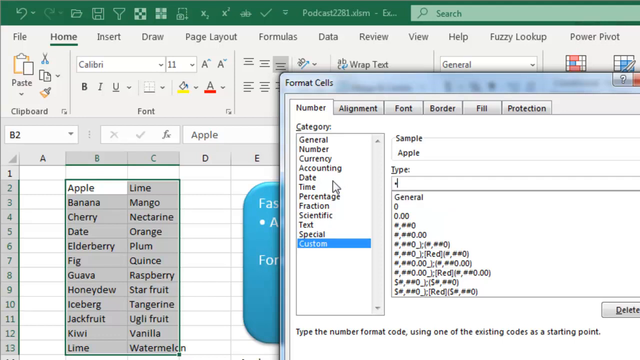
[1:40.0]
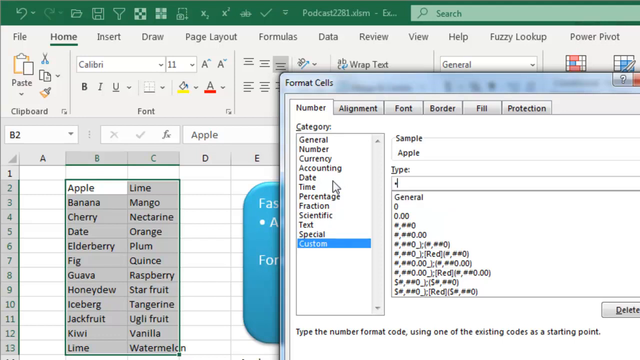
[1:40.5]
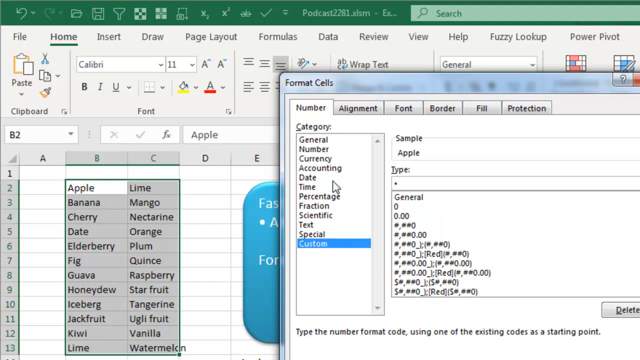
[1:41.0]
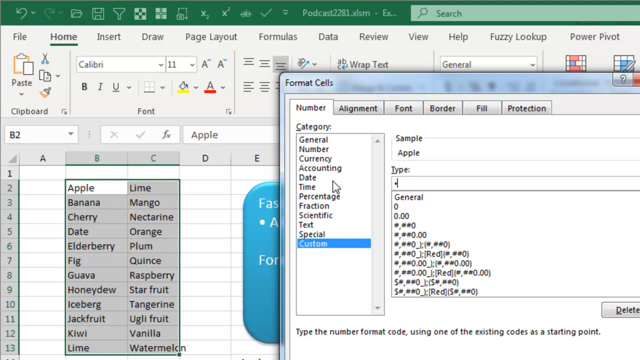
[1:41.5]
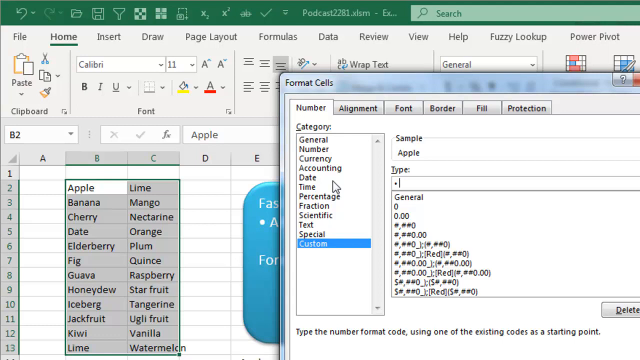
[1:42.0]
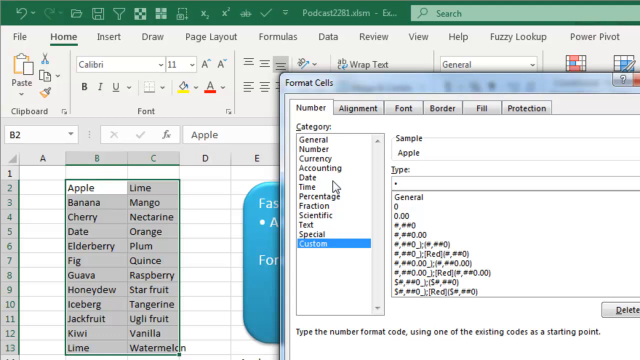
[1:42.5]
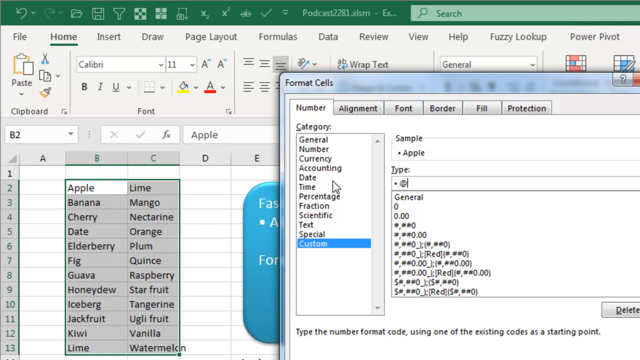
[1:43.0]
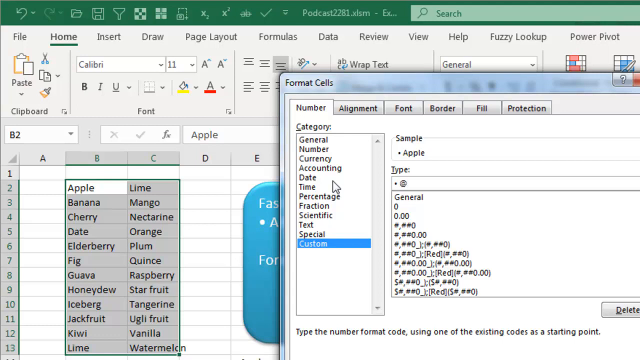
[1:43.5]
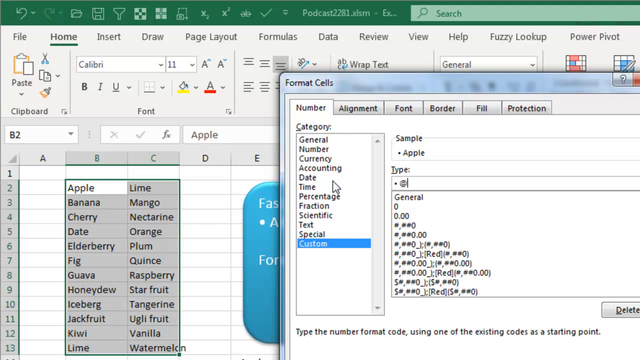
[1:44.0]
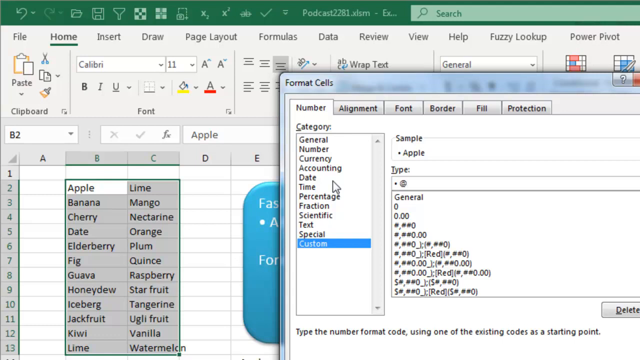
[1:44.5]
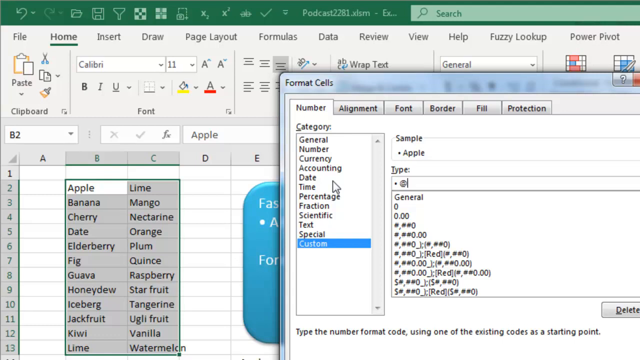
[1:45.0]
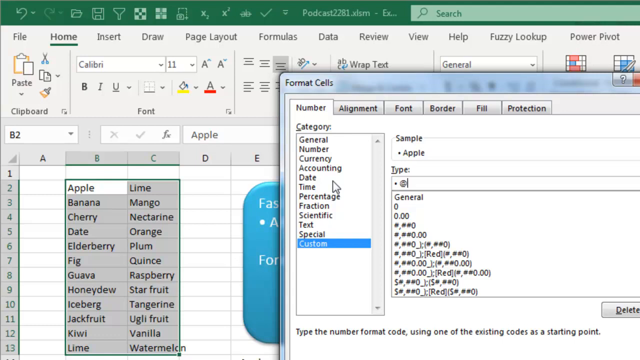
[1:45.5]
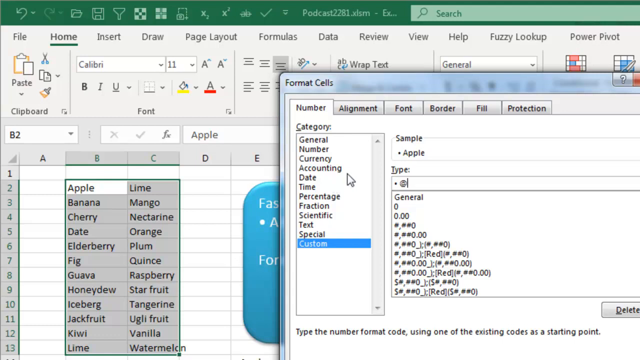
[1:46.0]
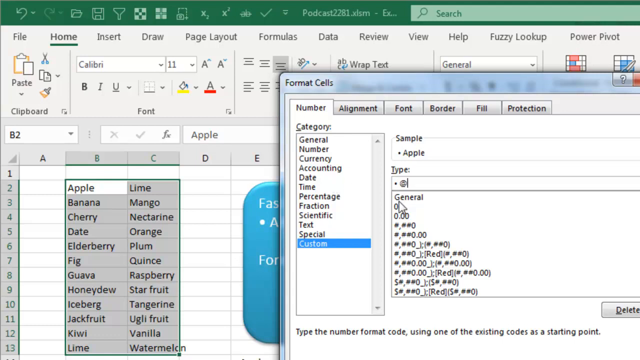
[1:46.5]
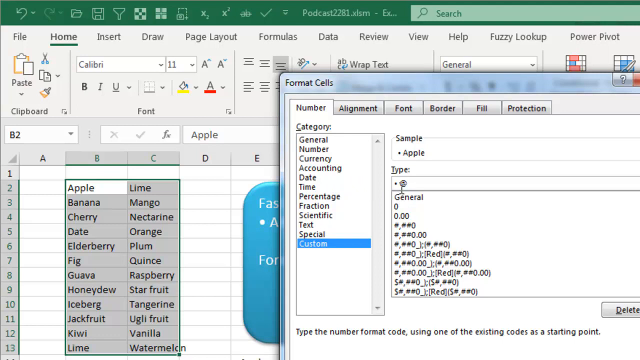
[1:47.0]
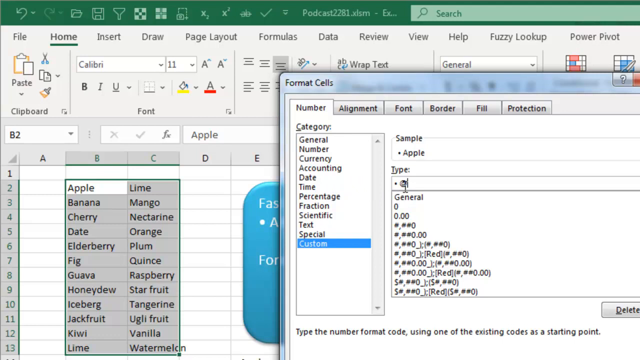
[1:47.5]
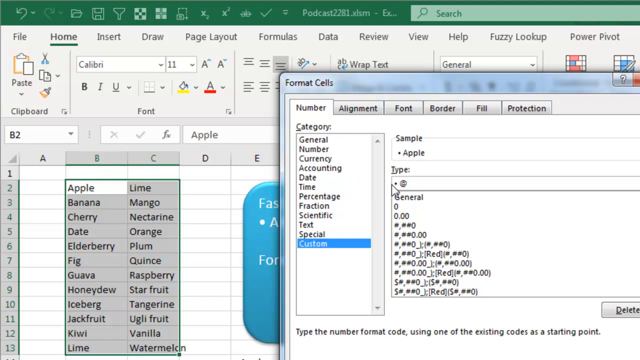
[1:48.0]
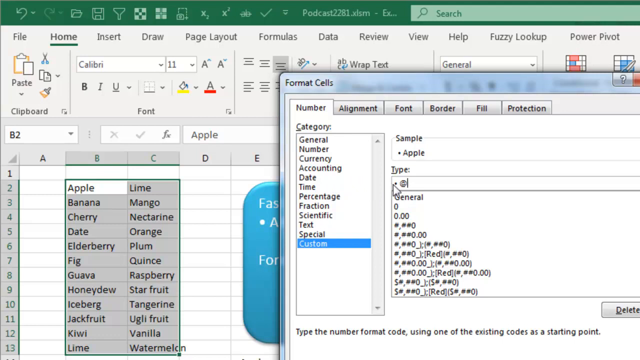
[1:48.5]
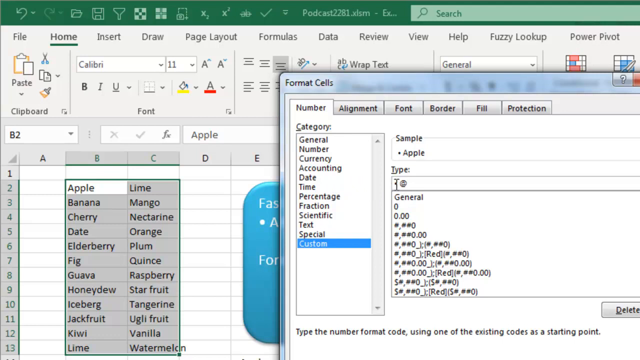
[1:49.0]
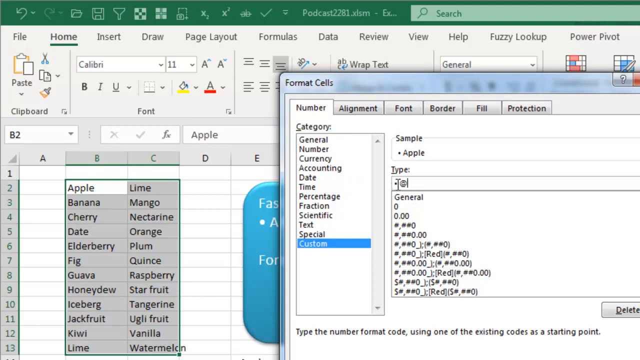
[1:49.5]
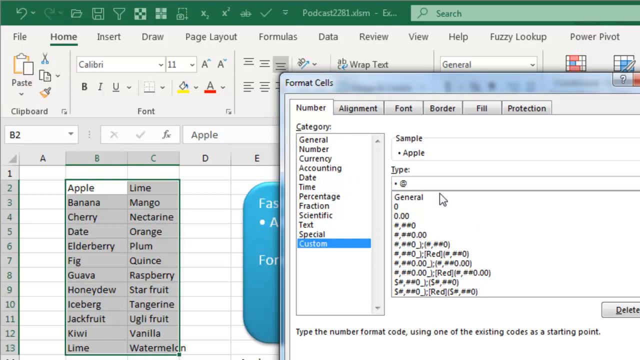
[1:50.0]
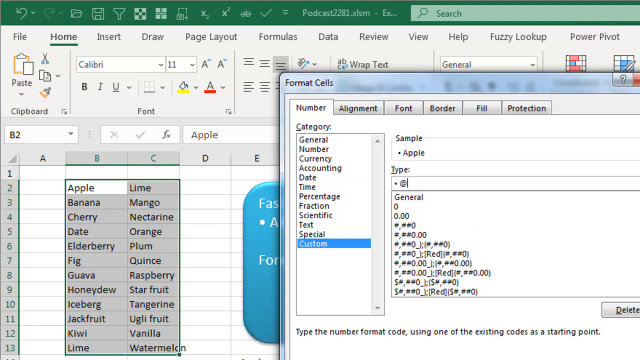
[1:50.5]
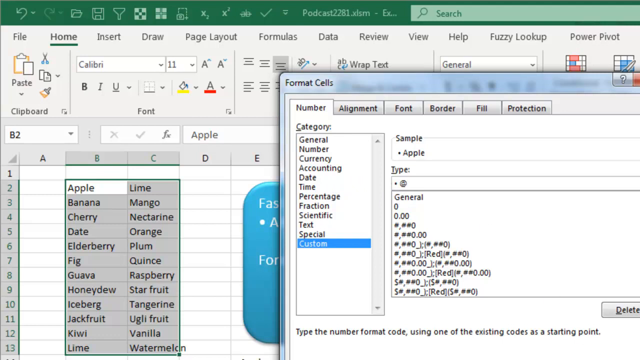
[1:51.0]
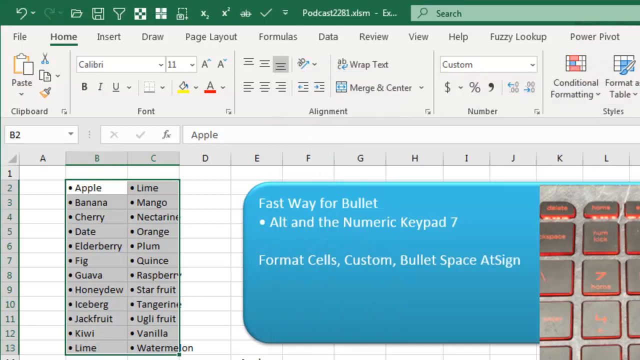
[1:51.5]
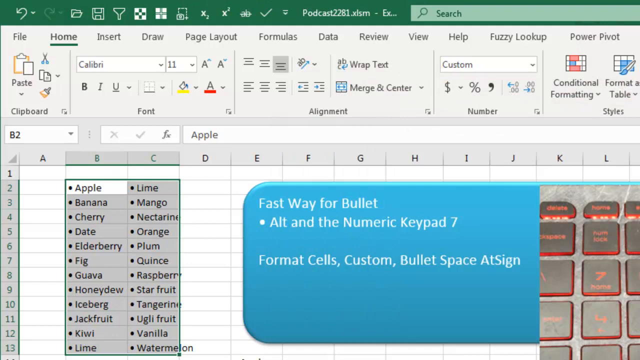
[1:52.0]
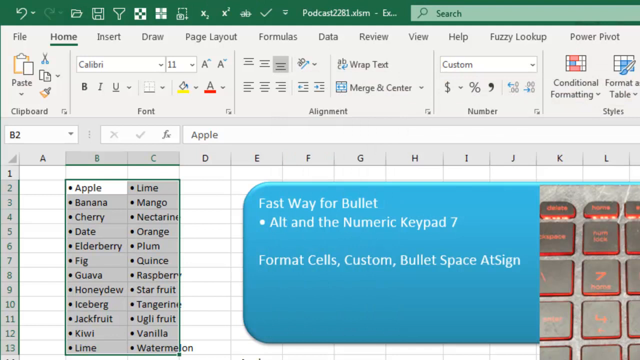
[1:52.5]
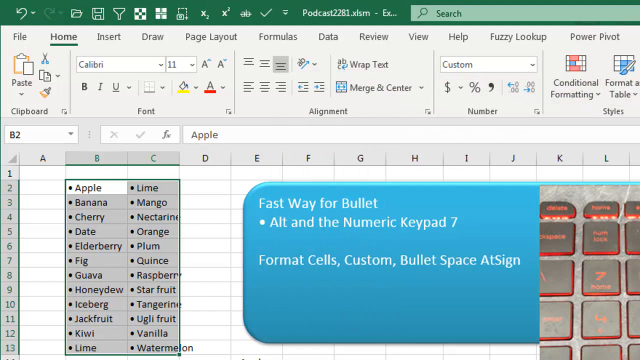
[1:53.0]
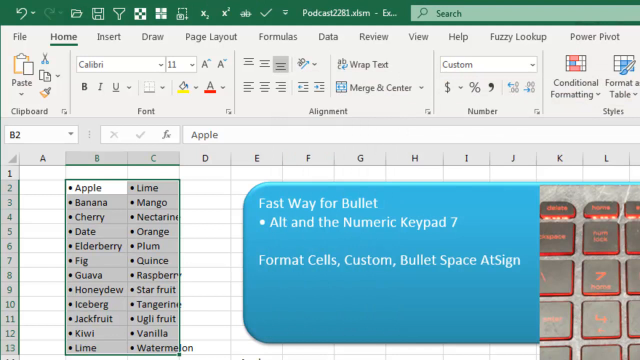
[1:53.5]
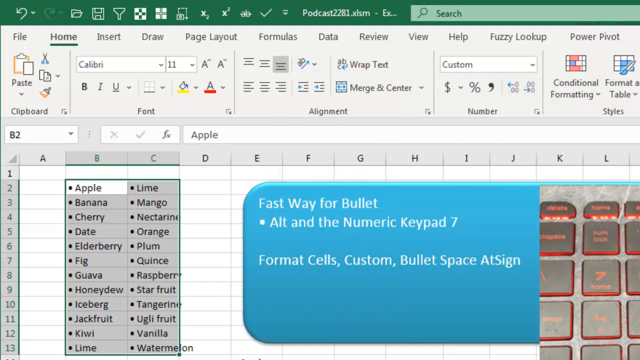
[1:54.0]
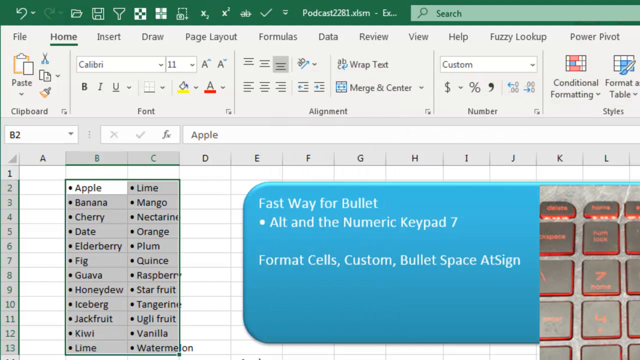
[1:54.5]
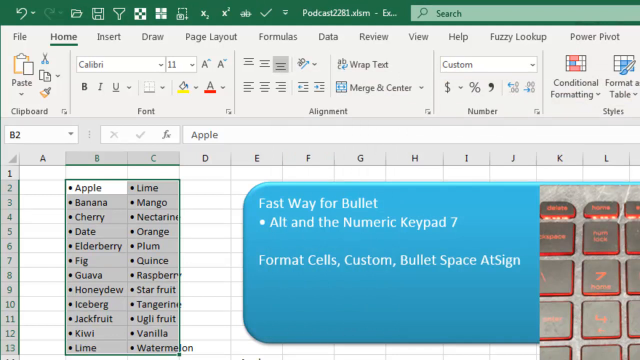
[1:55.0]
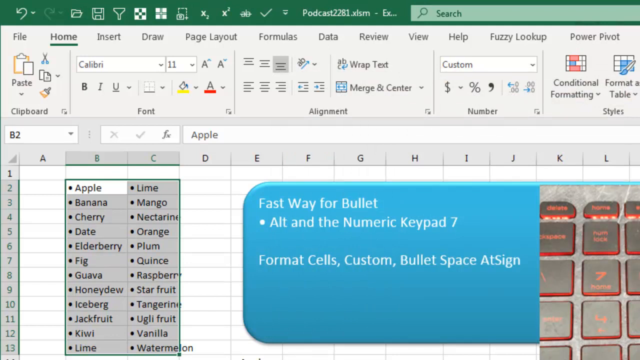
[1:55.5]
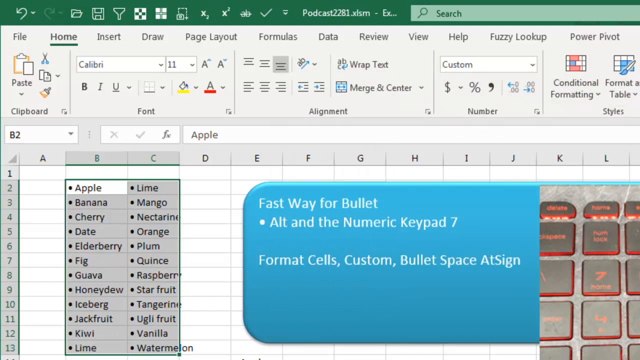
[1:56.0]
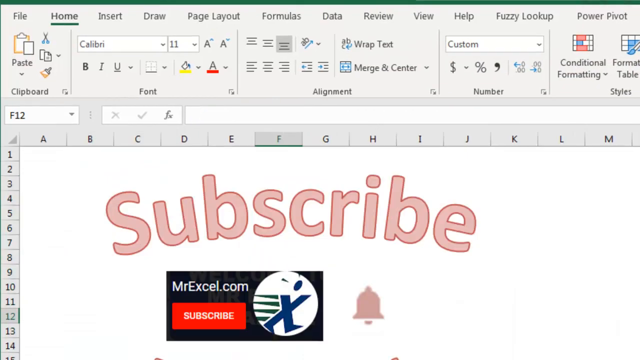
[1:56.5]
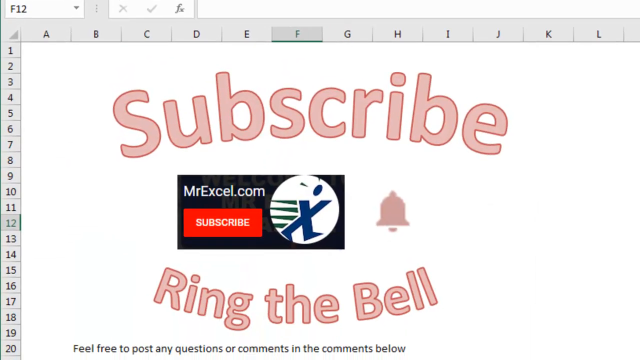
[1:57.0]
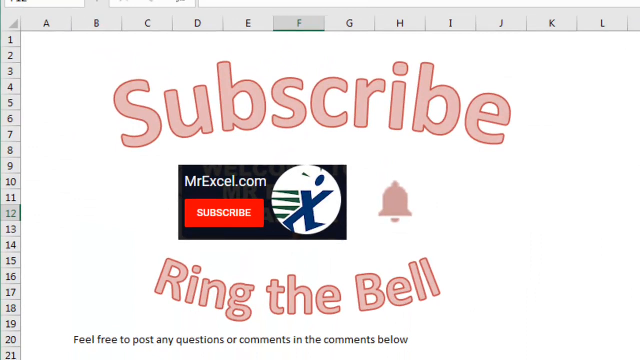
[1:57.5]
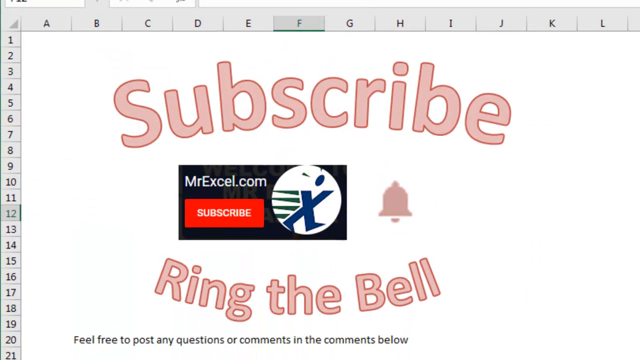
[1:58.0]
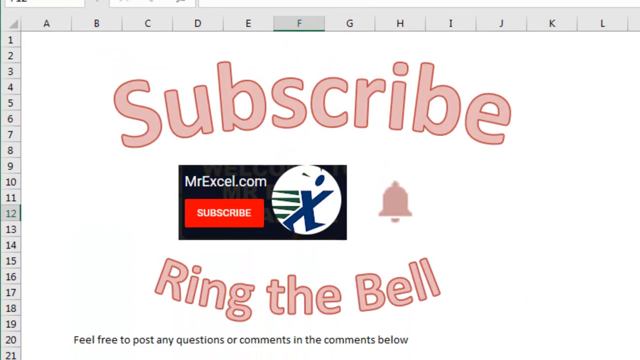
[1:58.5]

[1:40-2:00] A Format Cells box is open on top of the Excel spreadsheet. The Number tab is selected, the Category dropdown is open, and the bottom item, Custom, is highlighted in blue. A couple of symbols are typed into a field to the right of that list, the cursor clicks where the typing happened, and the box is closed and disappears. The view then changes away from the spreadsheet to the words "subscribe" and "ring the bell" with the website MrExcel.com.